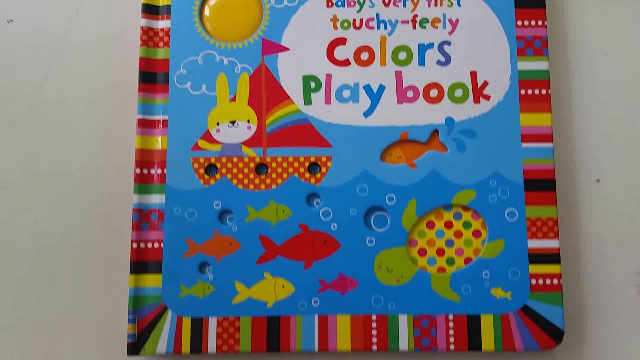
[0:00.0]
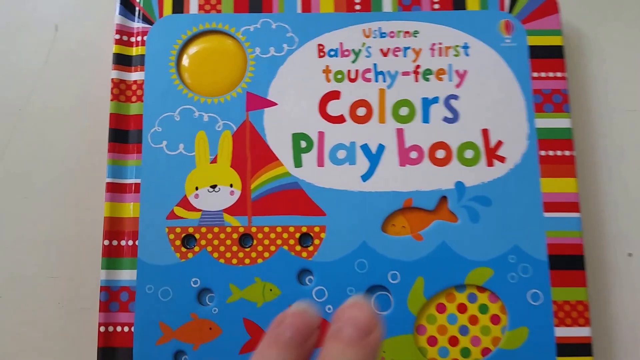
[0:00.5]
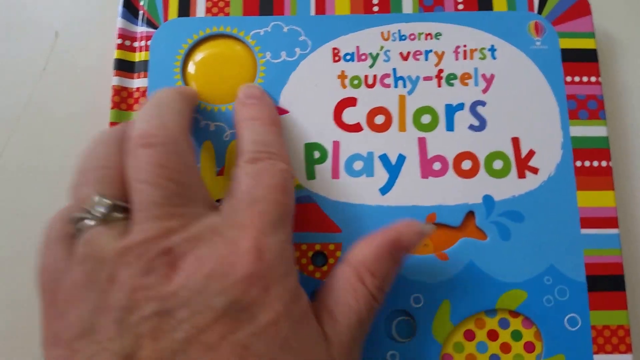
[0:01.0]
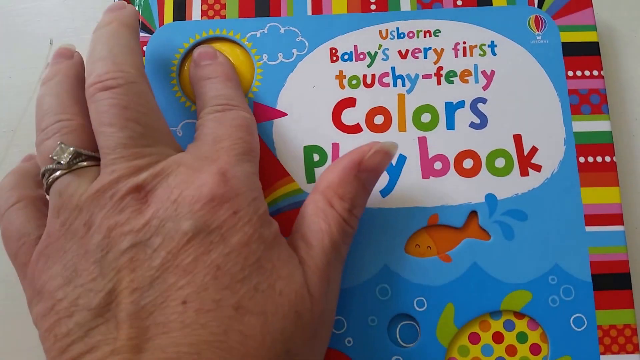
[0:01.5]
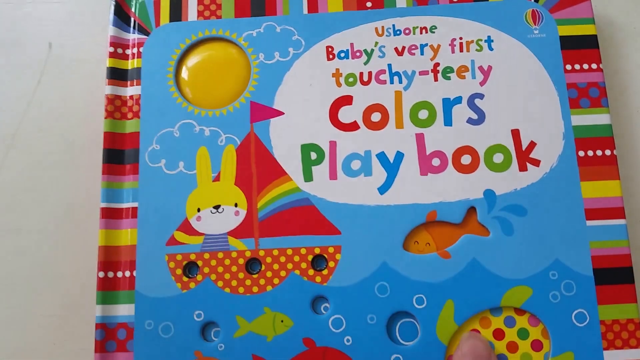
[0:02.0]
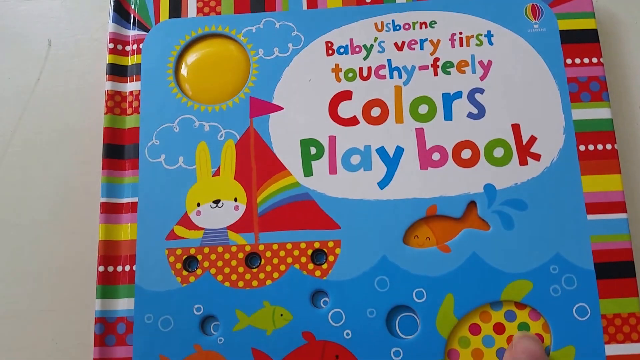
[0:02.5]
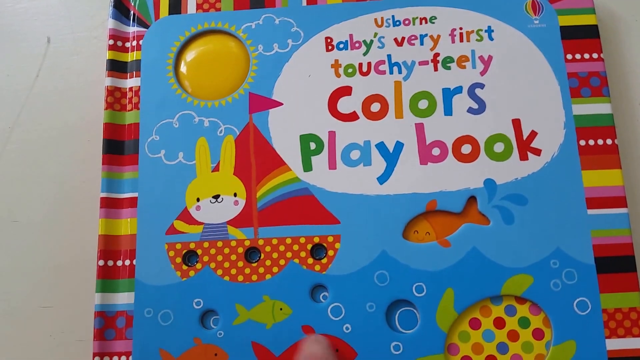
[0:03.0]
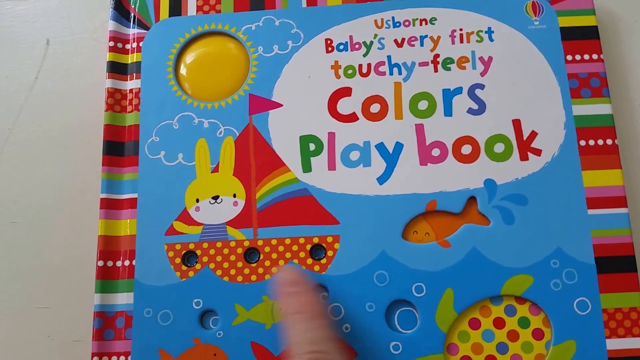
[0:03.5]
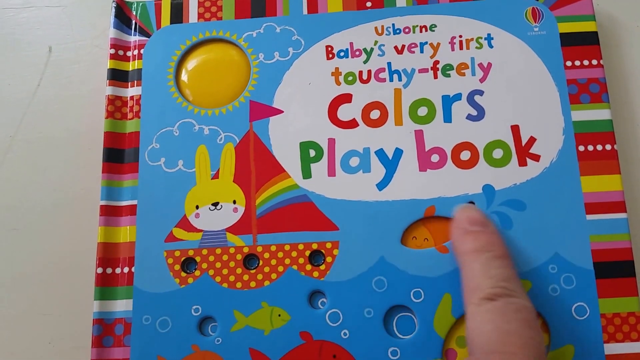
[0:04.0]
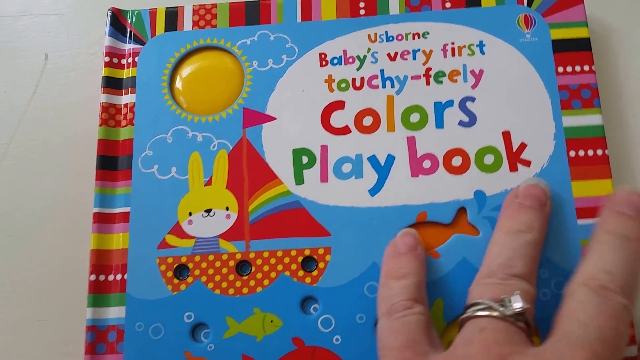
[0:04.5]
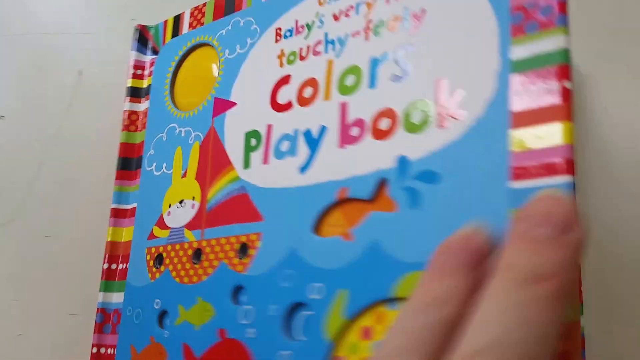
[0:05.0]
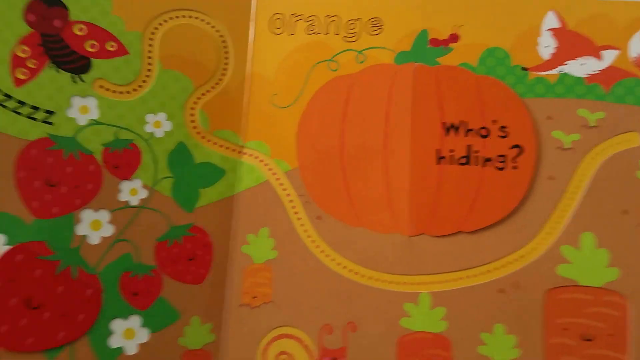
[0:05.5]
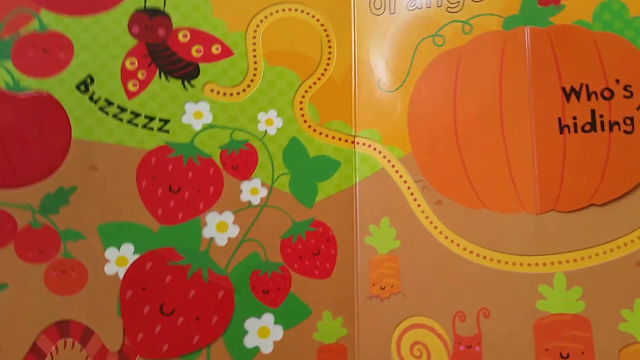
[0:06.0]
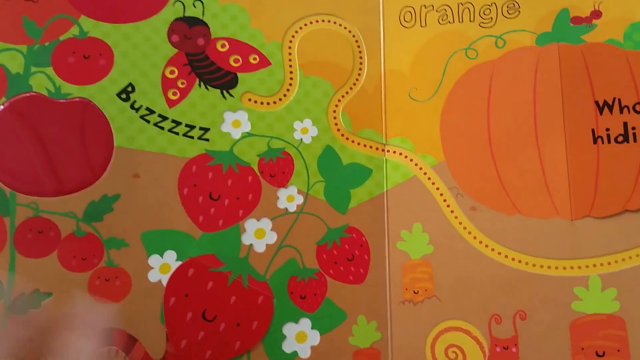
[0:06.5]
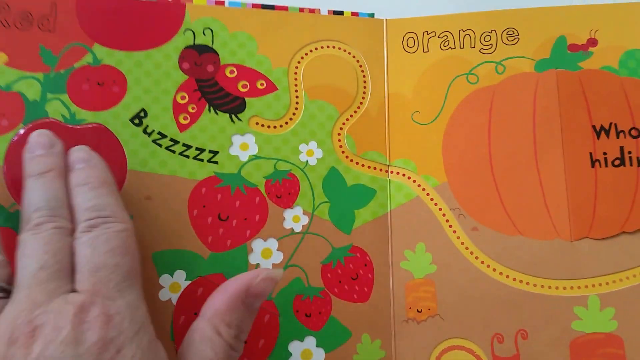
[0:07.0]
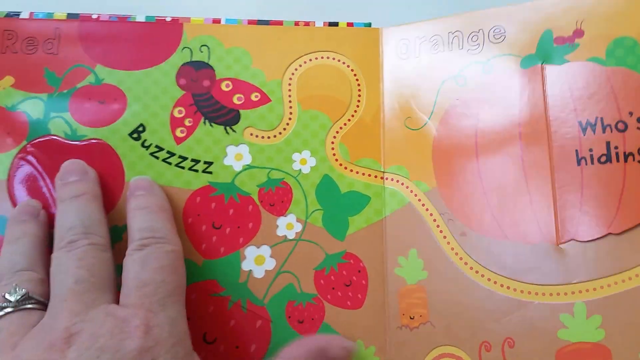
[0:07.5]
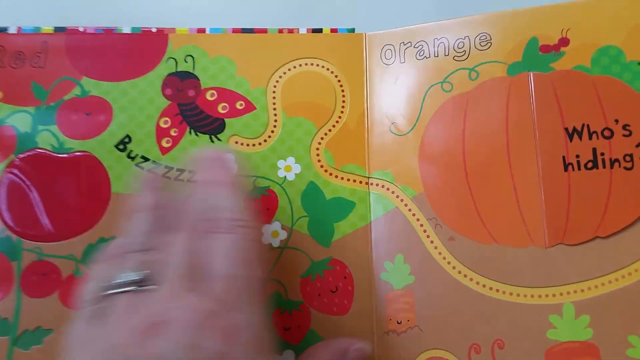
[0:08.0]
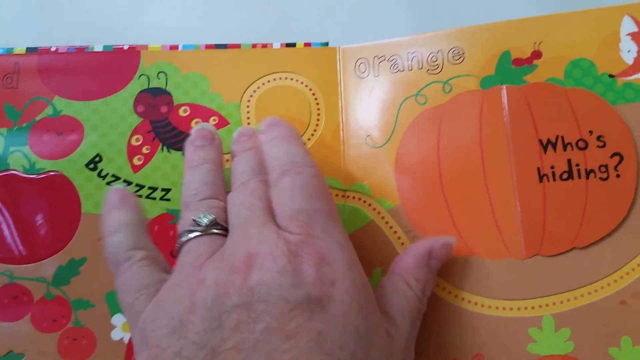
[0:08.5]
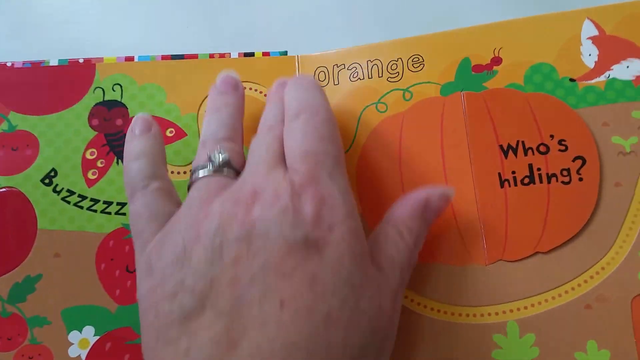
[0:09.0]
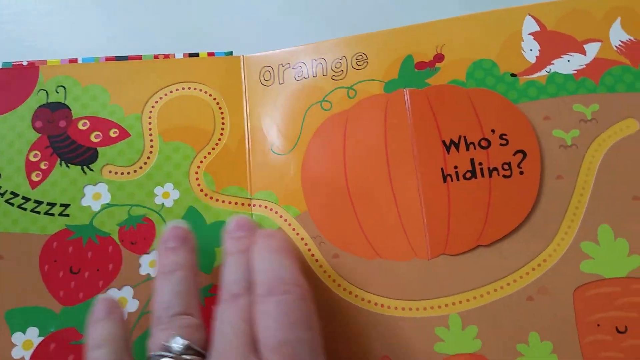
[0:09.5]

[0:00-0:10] Someone operates a Colors playbook, a very kid-friendly and very colorful book. They first click a button on the front of the cover, which has a yellow bunny on a sailboat with a red flag on it. They then open to the first page, which has what looks like a ladybug flying around, while the right page has a giant pumpkin. It appears that different things in the book can be clicked.